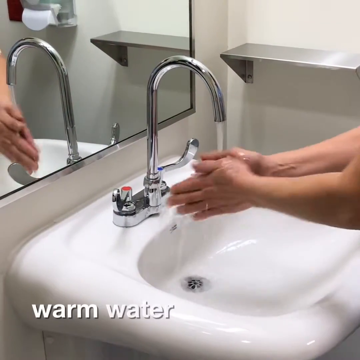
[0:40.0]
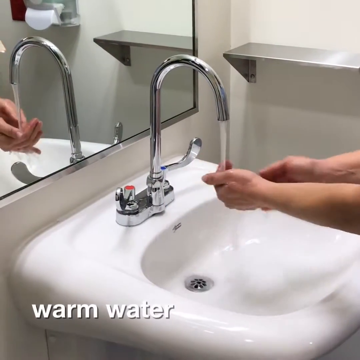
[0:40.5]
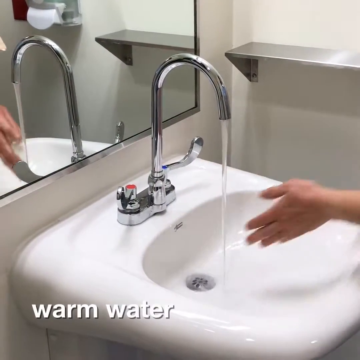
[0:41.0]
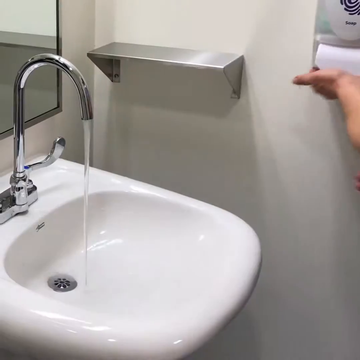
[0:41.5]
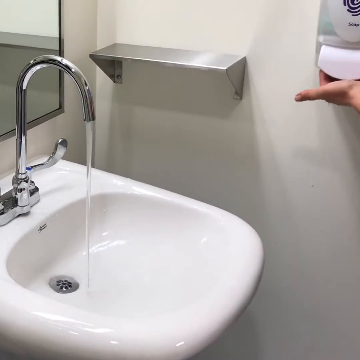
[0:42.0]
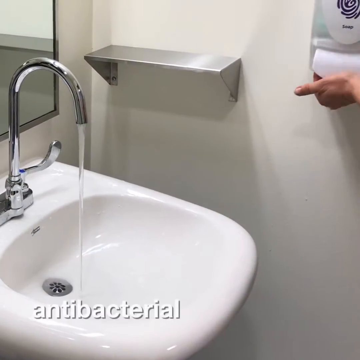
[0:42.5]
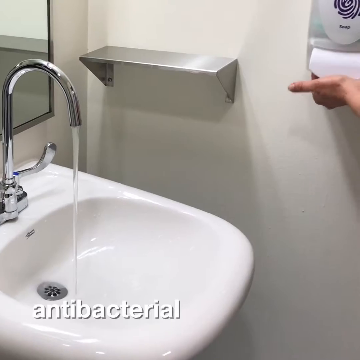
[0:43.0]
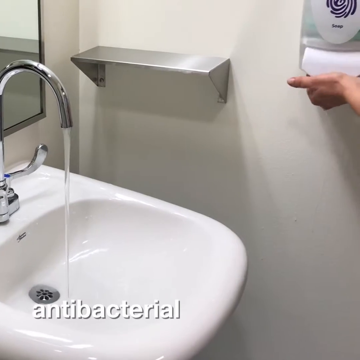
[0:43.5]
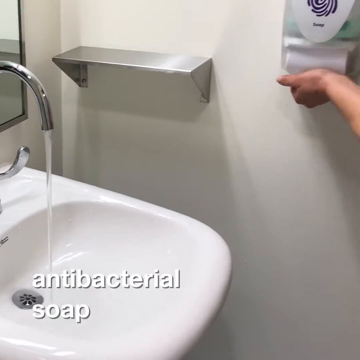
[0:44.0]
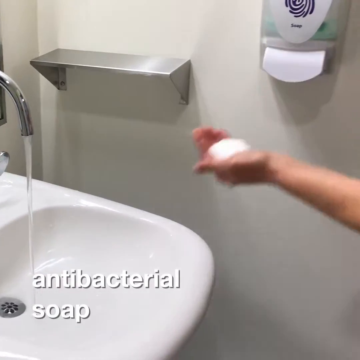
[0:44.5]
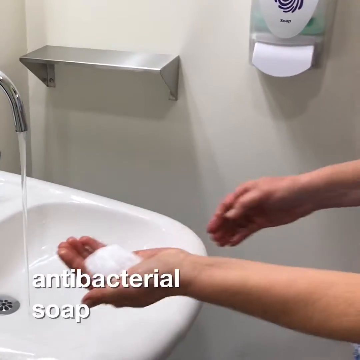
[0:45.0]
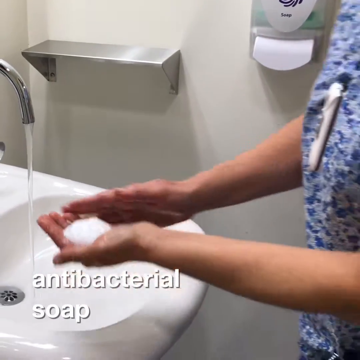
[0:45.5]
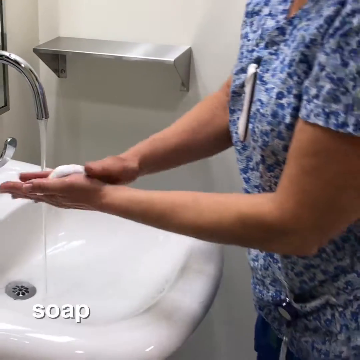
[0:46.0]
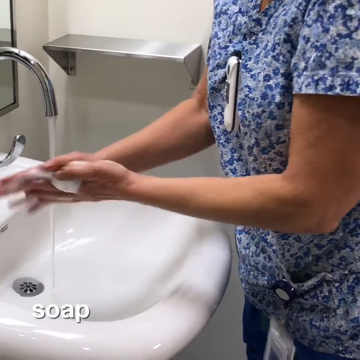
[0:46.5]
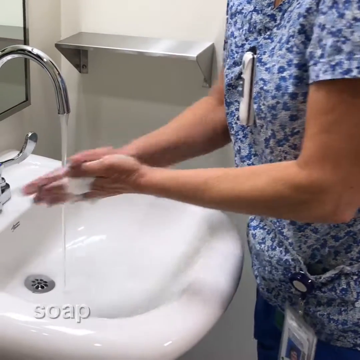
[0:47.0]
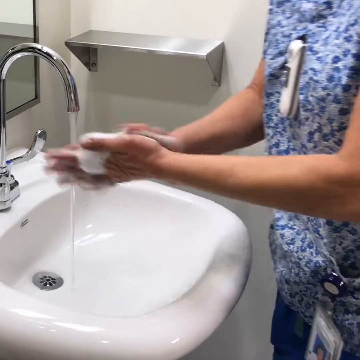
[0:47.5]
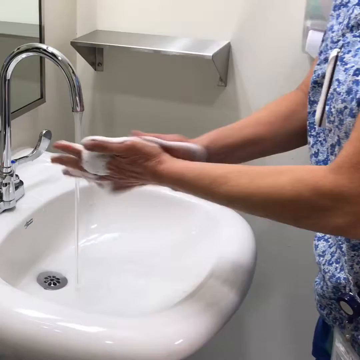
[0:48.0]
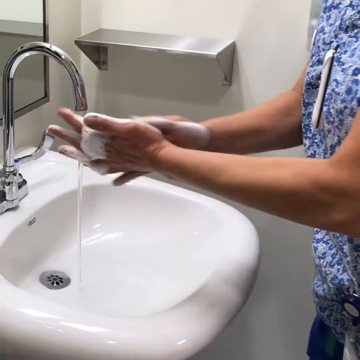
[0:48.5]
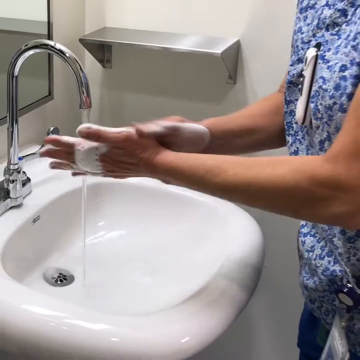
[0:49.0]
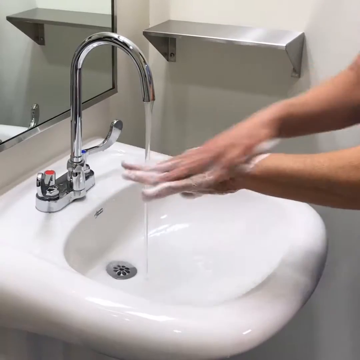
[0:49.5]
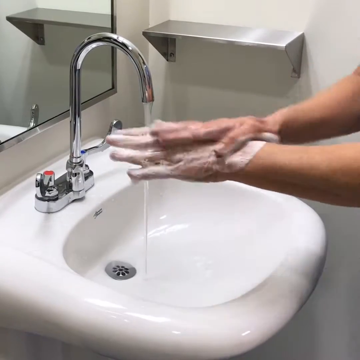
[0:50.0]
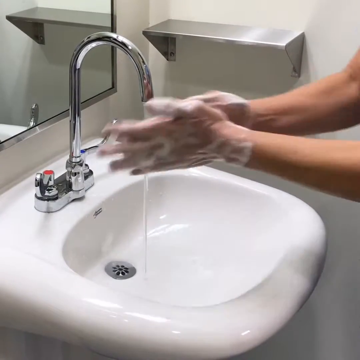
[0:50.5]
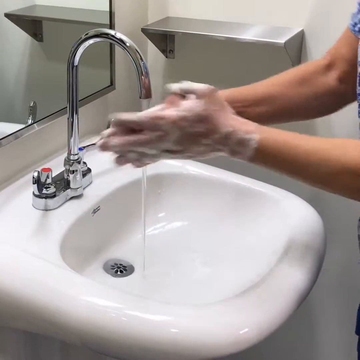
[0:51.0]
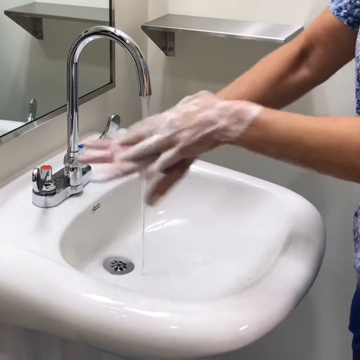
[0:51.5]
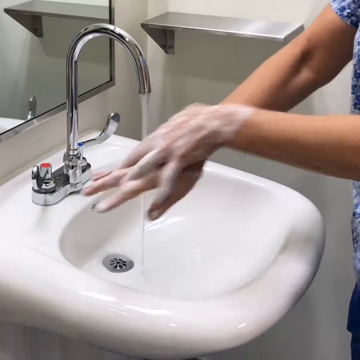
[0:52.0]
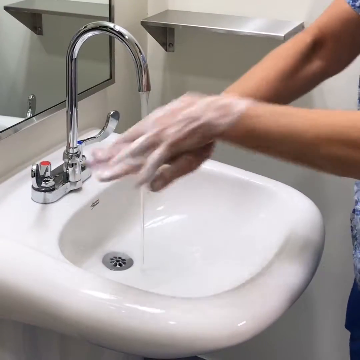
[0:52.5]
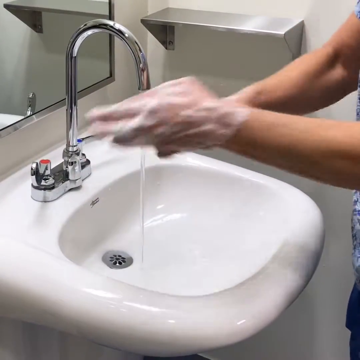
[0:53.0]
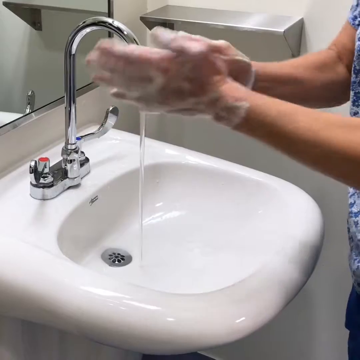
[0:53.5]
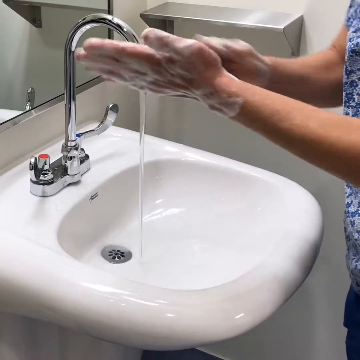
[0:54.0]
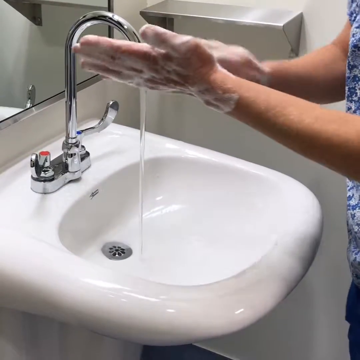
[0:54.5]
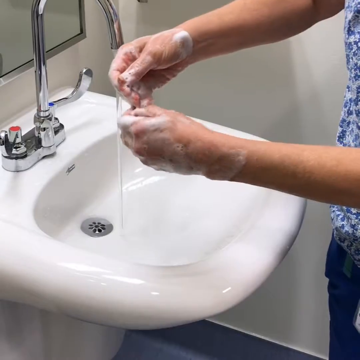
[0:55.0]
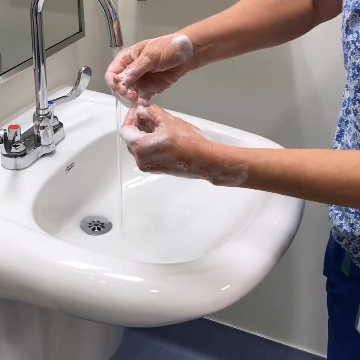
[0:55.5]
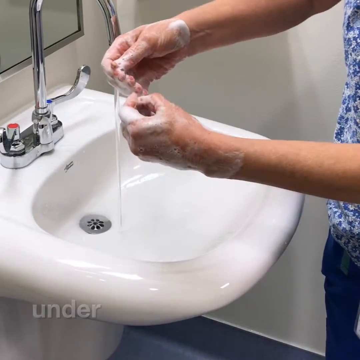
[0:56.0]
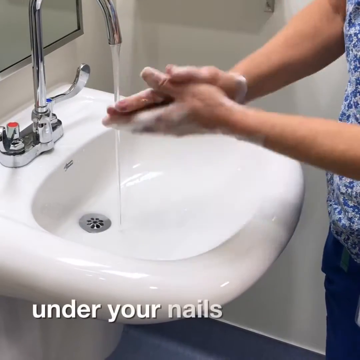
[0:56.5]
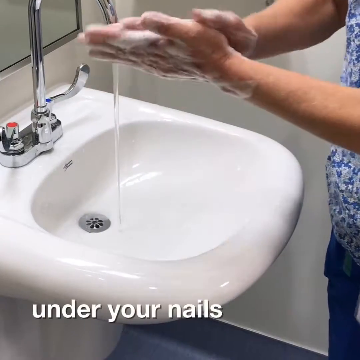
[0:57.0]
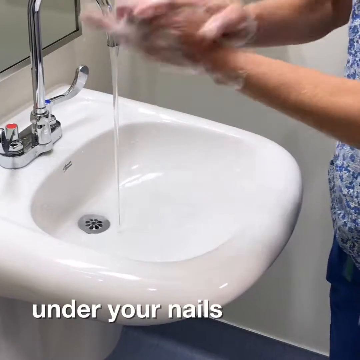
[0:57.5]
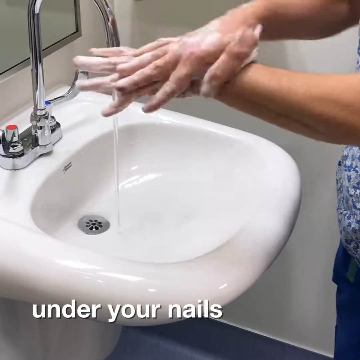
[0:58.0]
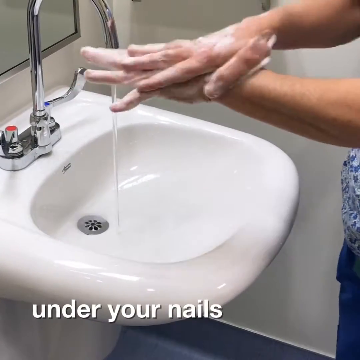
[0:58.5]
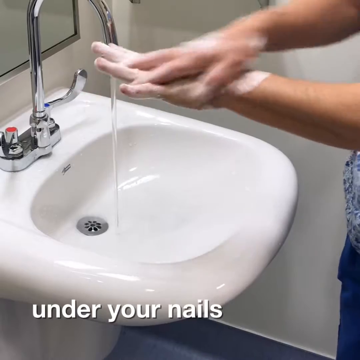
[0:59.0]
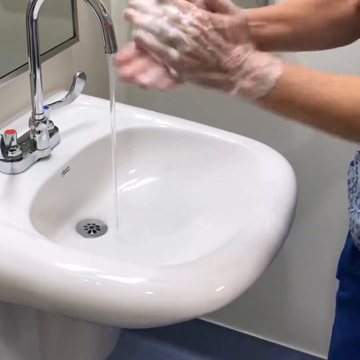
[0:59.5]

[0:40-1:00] Although the video said to remove jewelry, the person washing appears to be wearing a ring, at least at first. The caption "warm water" appears while they wash. They get soap out of a dispenser while "antibacterial soap" appears at the bottom, and the water runs the whole time. The text "under your nails" appears as the person picks at their nails. They wash their hands very carefully, over and over. The setting is a standard bathroom with a curled faucet that comes up and over, with two handles on either side to release the water. It looks like they are running a mixture of hot and cold water. There is a silver metal shelf on the side.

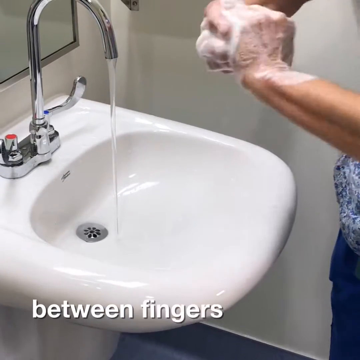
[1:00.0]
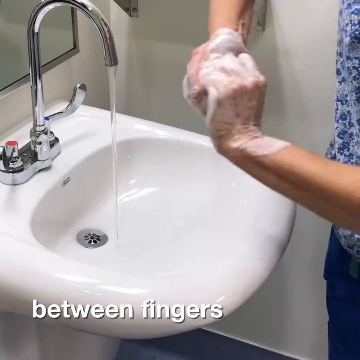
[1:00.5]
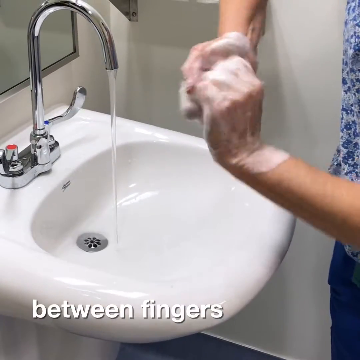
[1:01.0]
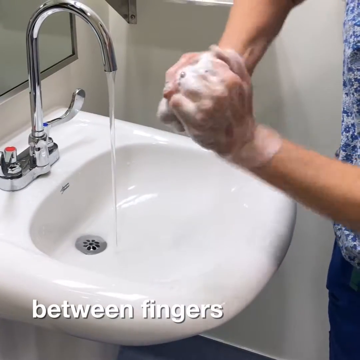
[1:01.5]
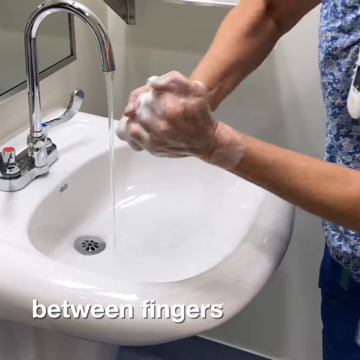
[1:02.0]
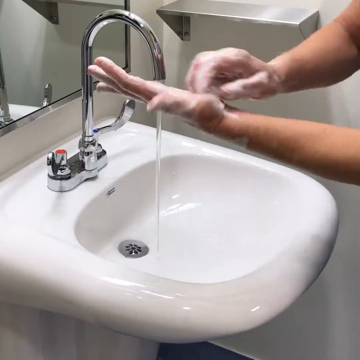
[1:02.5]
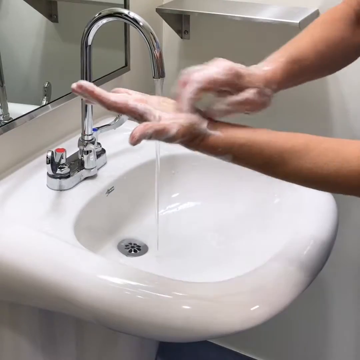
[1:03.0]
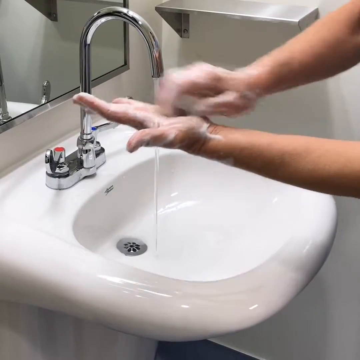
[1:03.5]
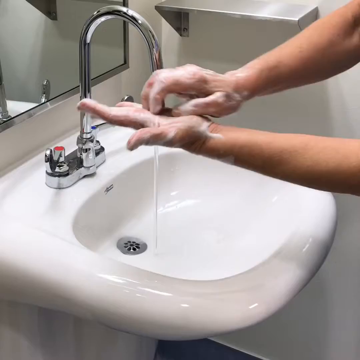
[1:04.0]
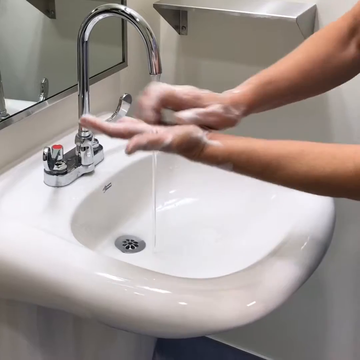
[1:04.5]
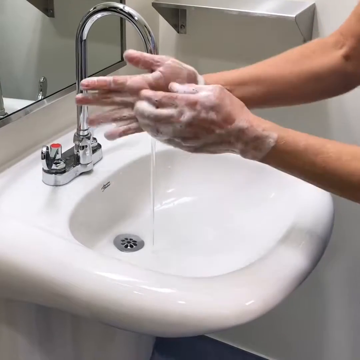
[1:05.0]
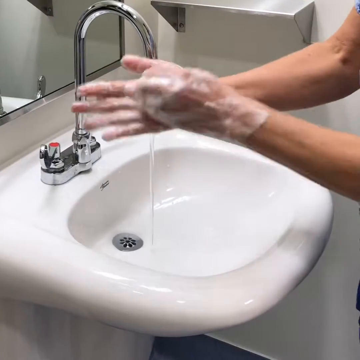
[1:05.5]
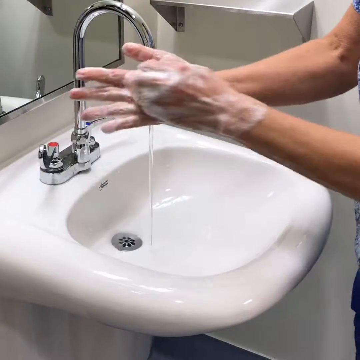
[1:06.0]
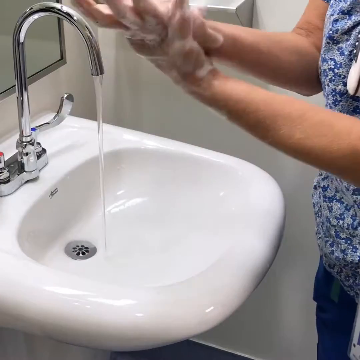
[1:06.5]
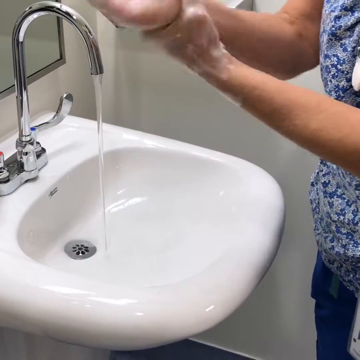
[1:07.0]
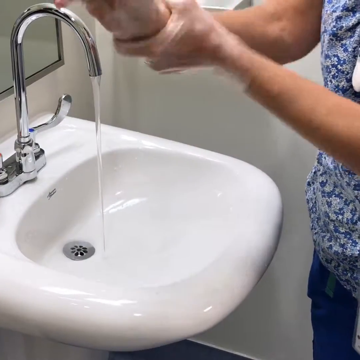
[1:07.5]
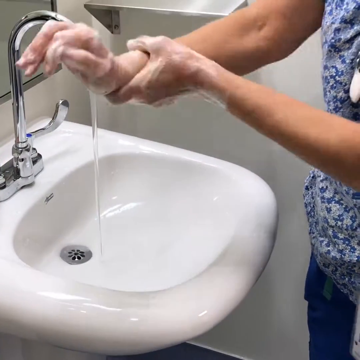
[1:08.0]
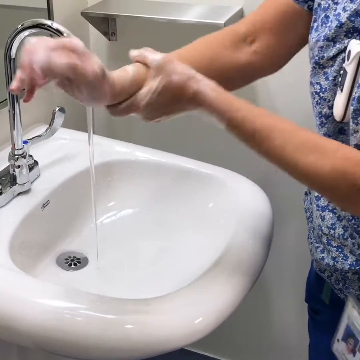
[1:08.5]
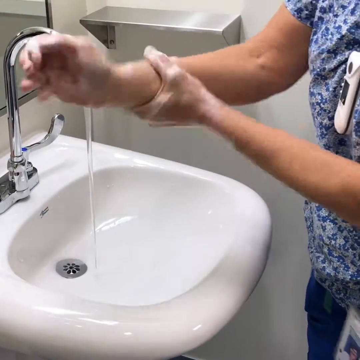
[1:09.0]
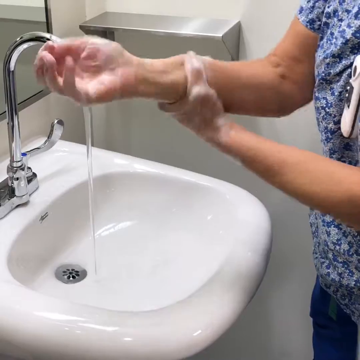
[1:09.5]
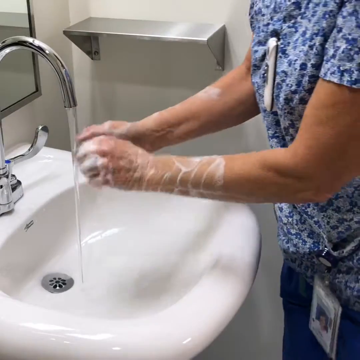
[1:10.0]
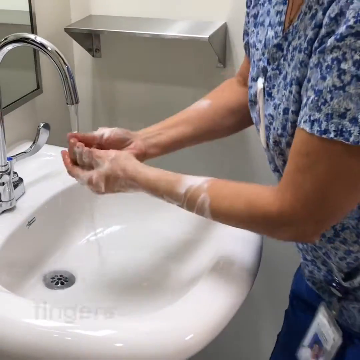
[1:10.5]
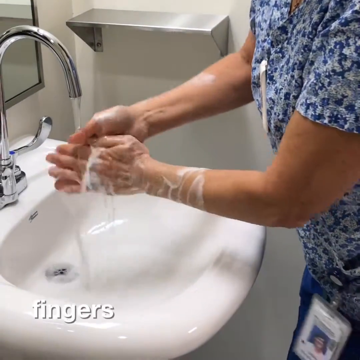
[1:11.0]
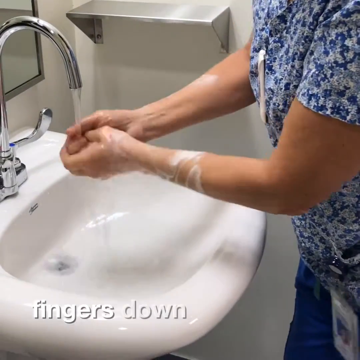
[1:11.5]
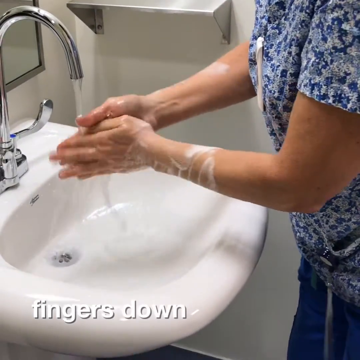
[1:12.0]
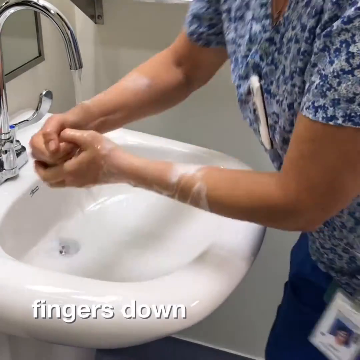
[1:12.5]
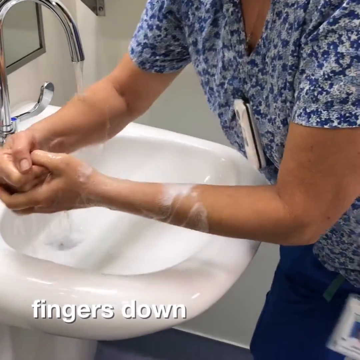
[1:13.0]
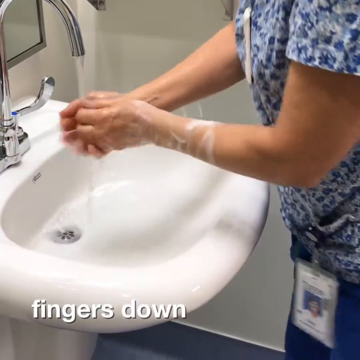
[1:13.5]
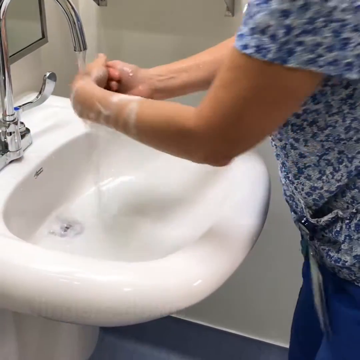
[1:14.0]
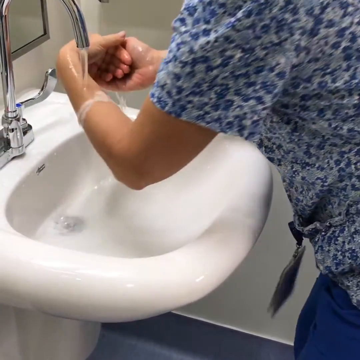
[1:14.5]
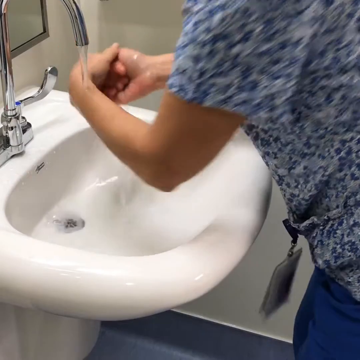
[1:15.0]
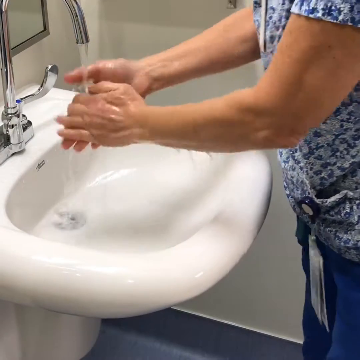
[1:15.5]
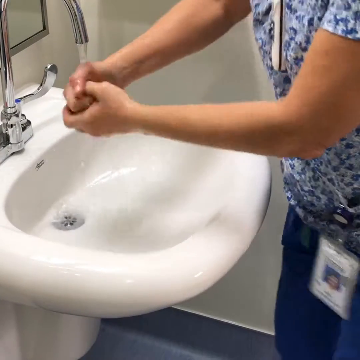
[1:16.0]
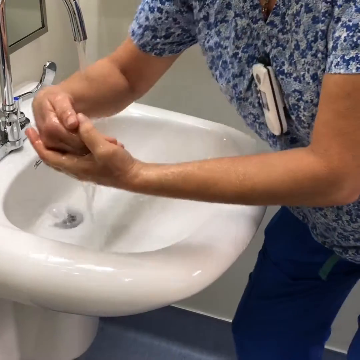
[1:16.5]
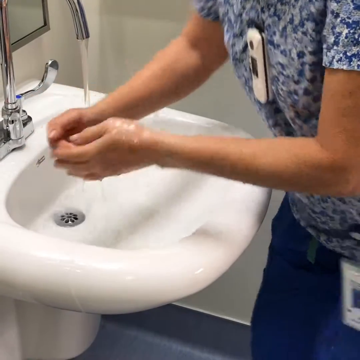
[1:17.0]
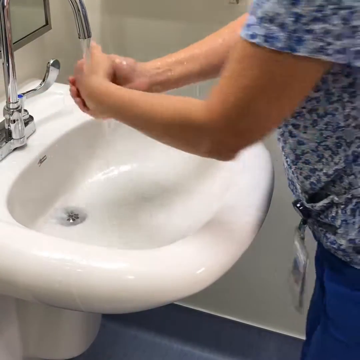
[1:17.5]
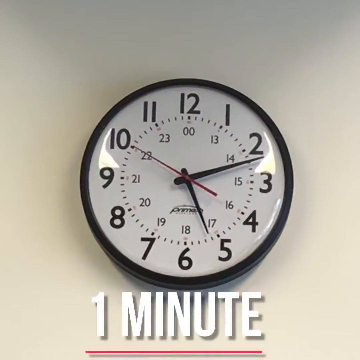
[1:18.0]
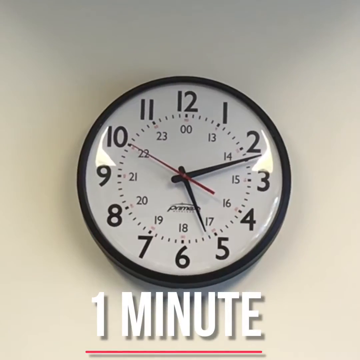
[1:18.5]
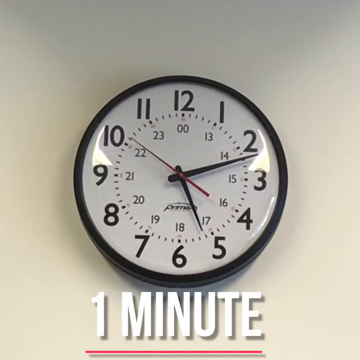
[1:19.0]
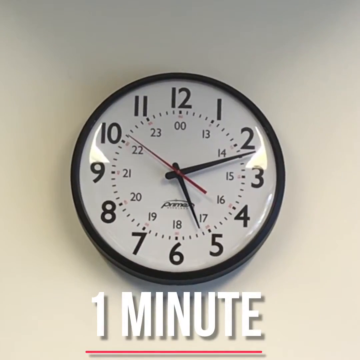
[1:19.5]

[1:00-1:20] The person washing their hands wears a multicolored blue smock and blue pants. The text "between fingers" appears, and the person scrubs in between their fingers. They also scratch their palms very hard, with a lot of soap and the water always running. A mirror is there, but because of the camera angle almost nothing is visible in it except maybe a shadow. The person wears a body cam at the center top of their chest and some type of badge with a clip on the lower left part of the smock. At the end, a clock reads one minute, which seems to indicate that the scrubbing between the fingers, scrubbing of the palms, and washing of the wrists up the arm should last that long.